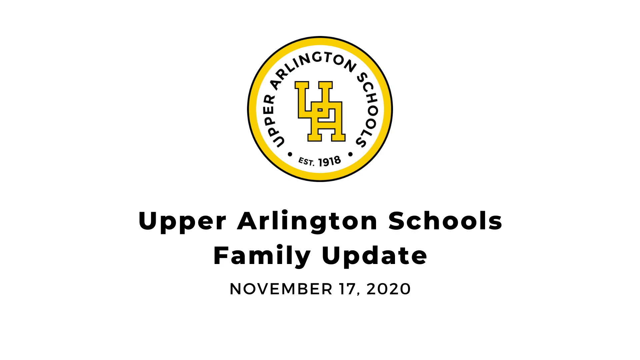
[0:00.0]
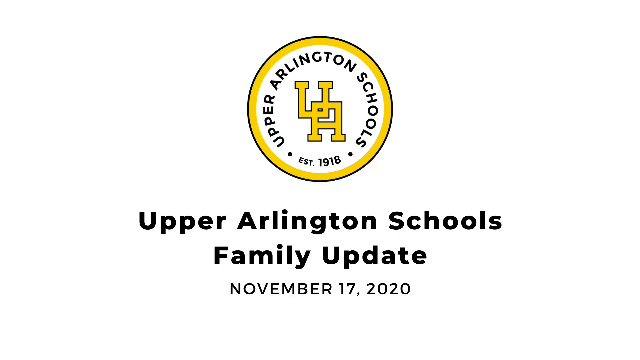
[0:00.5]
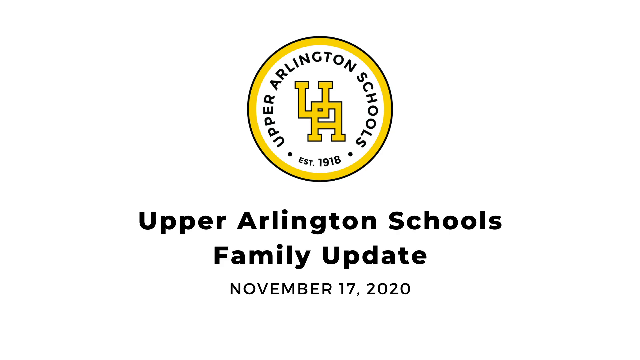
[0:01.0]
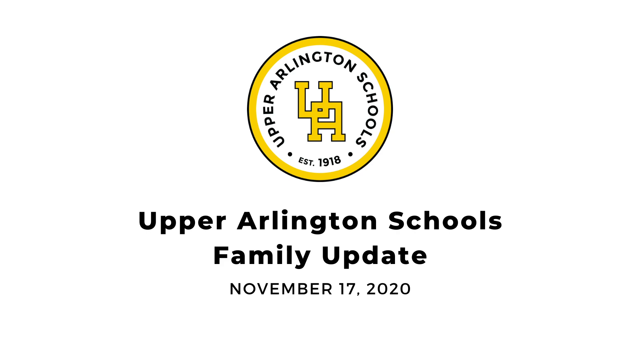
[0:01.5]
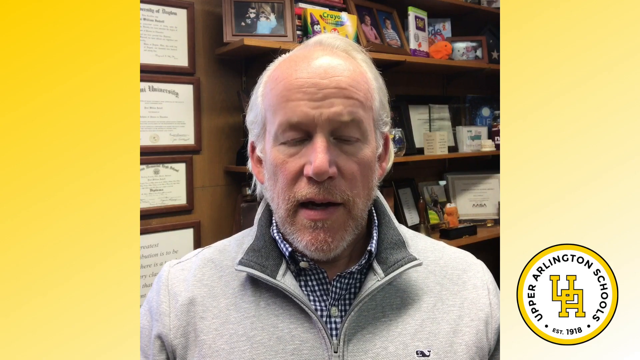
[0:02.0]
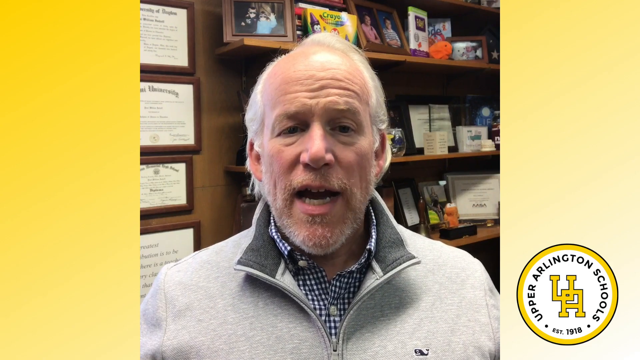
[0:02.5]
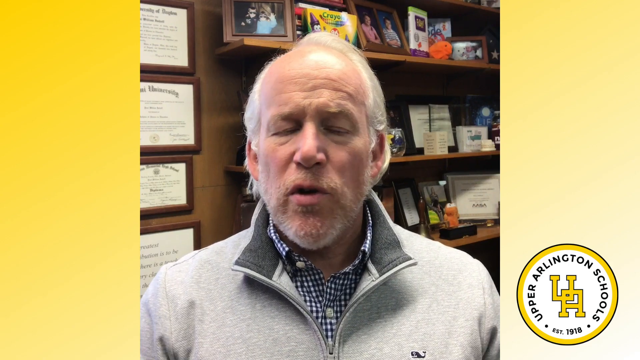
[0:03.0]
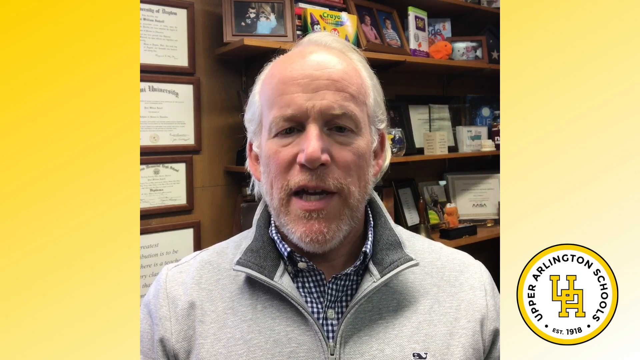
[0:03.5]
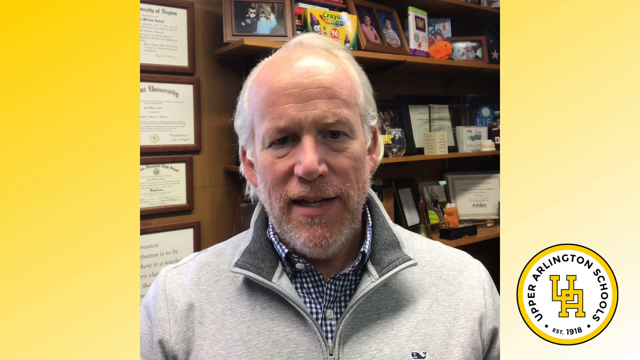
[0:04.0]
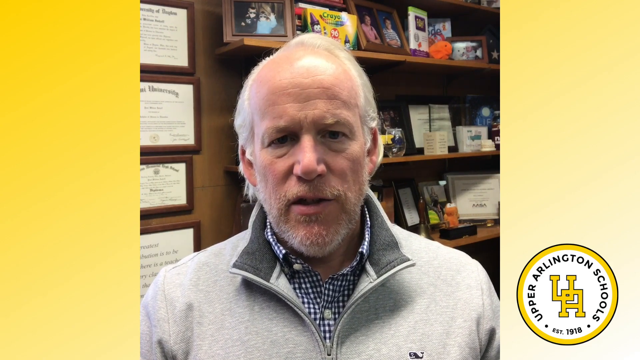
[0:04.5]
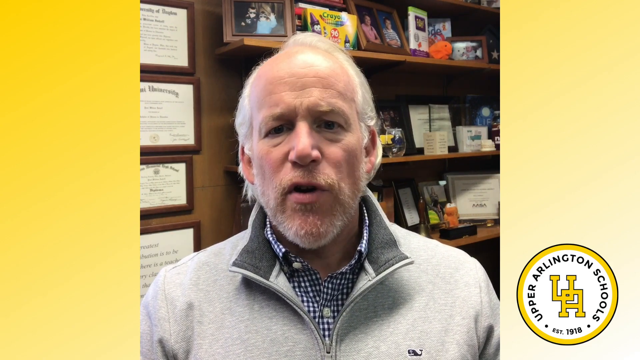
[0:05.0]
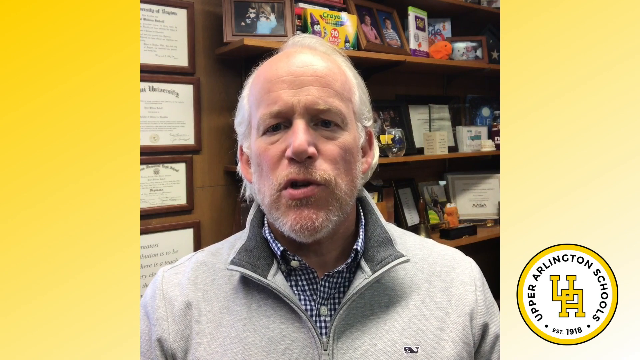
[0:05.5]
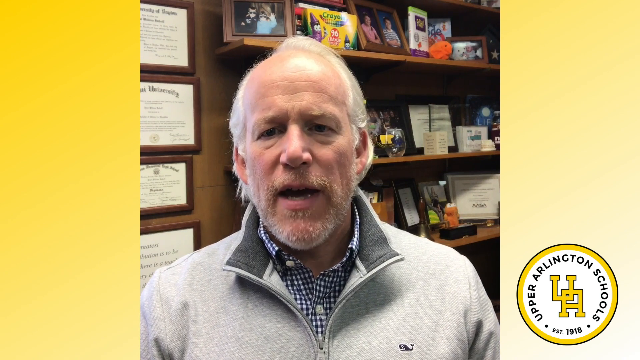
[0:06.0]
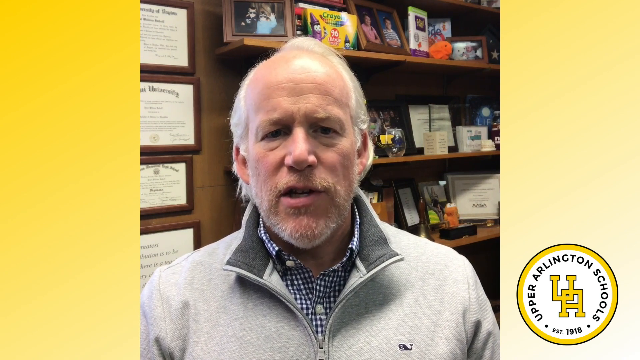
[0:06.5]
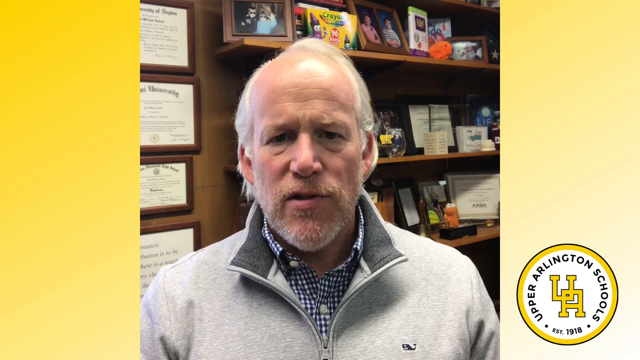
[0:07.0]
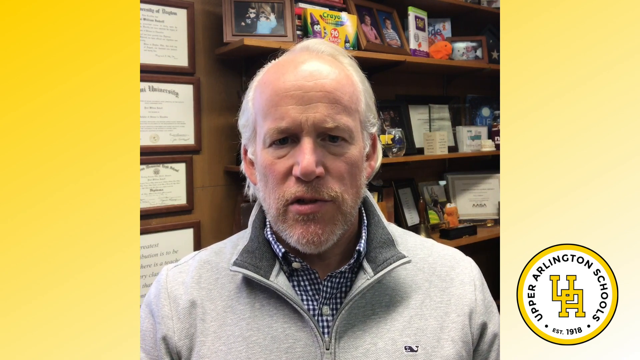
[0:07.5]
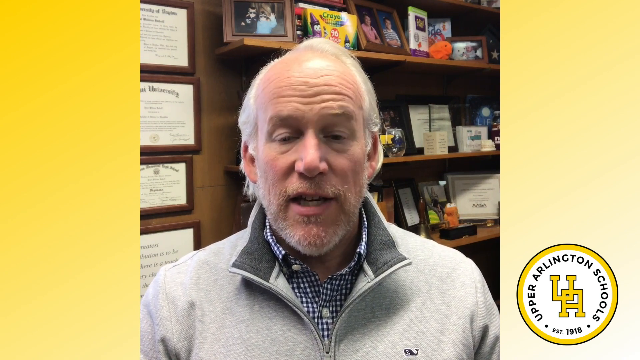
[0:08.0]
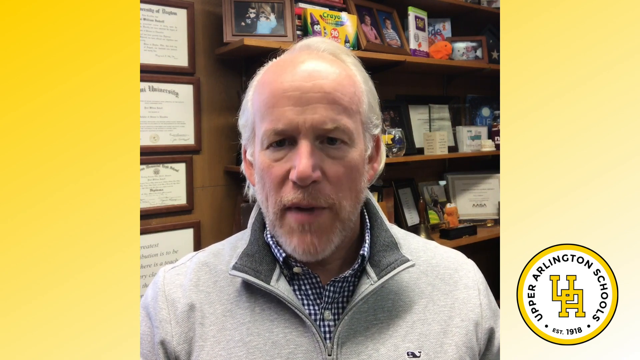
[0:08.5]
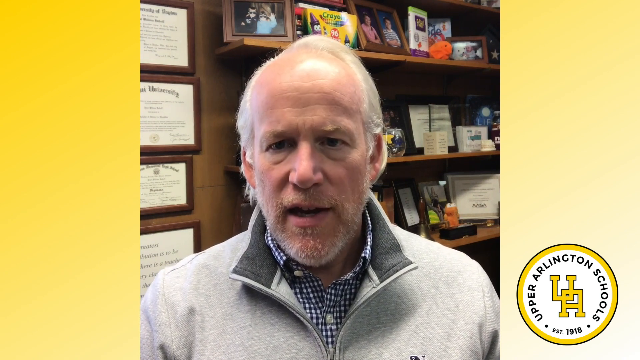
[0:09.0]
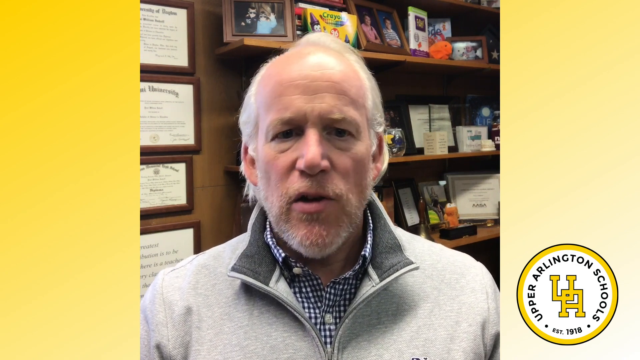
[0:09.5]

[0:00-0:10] A school logo for Upper Arlington Schools appears: a circle whose rim is black with a thicker yellow line in it. It shows a U and an A and reads "established in 1918." Underneath, in bold black letters, is "Upper Arlington Schools family update November 17, 2020." The video then transitions to an older man, apparently on the faculty of Upper Arlington Schools, talking to the camera. No name is shown for him. He wears a gray jersey, and he appears to be filming in a home office, since a shelf full of books is behind him.